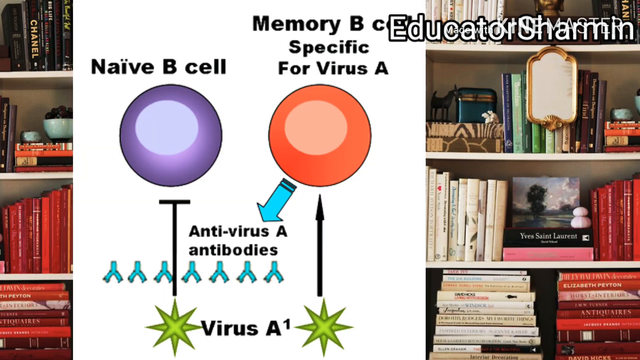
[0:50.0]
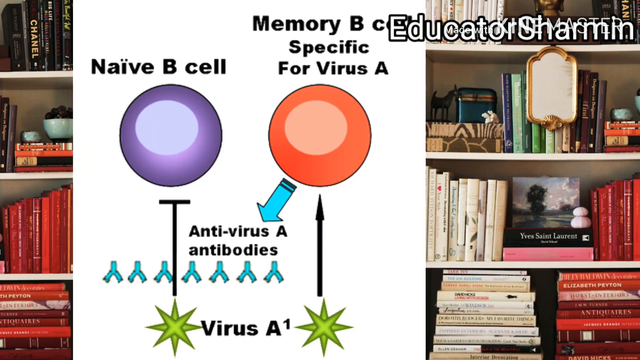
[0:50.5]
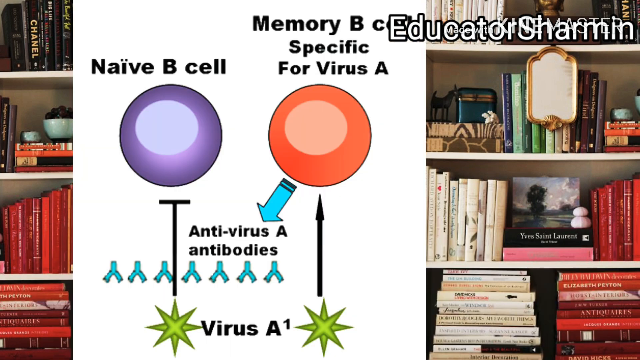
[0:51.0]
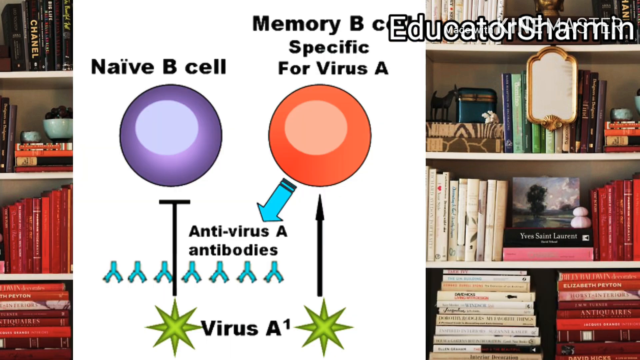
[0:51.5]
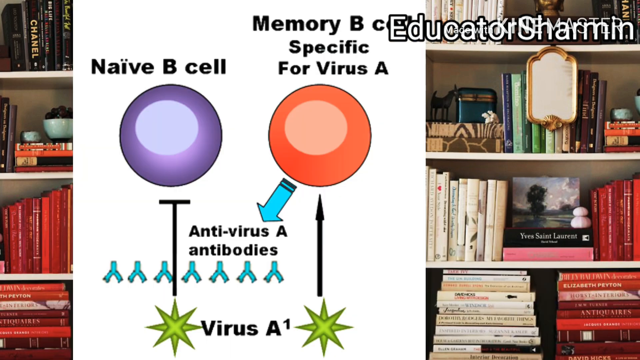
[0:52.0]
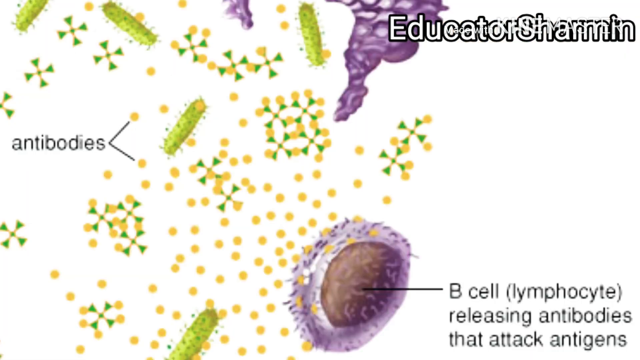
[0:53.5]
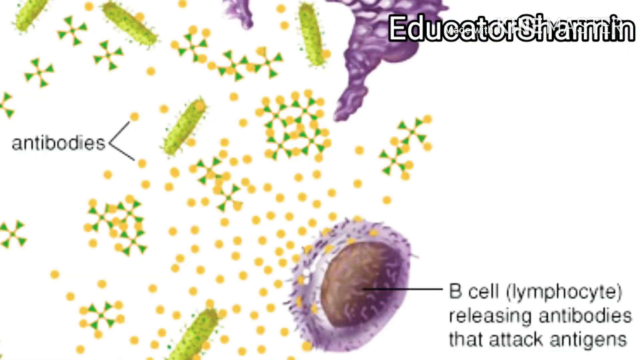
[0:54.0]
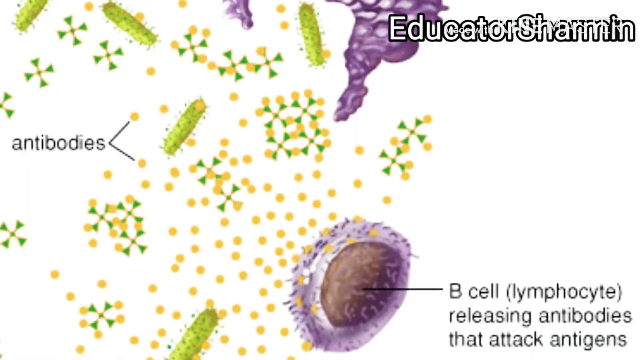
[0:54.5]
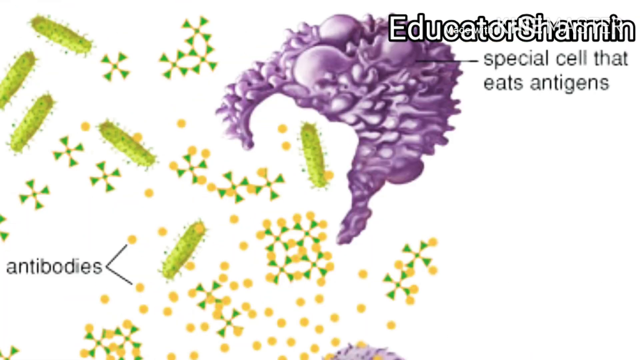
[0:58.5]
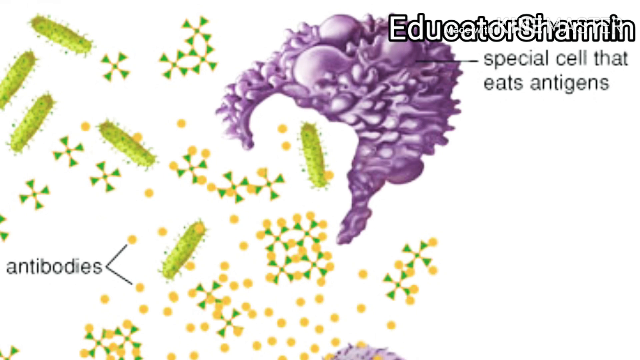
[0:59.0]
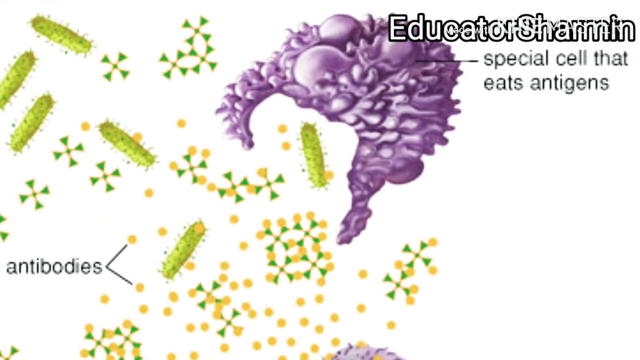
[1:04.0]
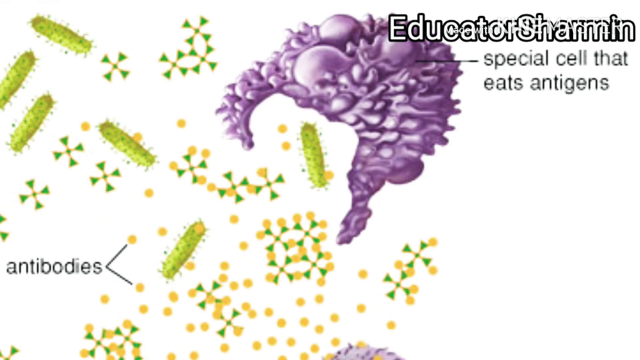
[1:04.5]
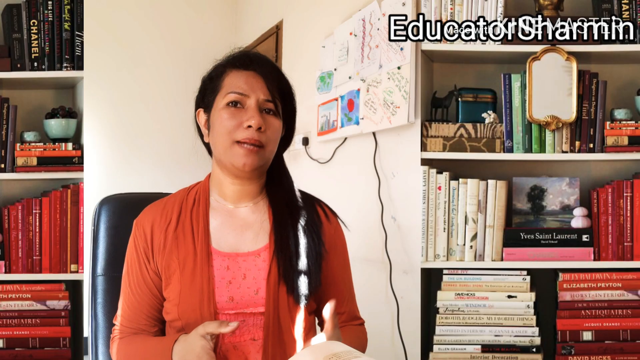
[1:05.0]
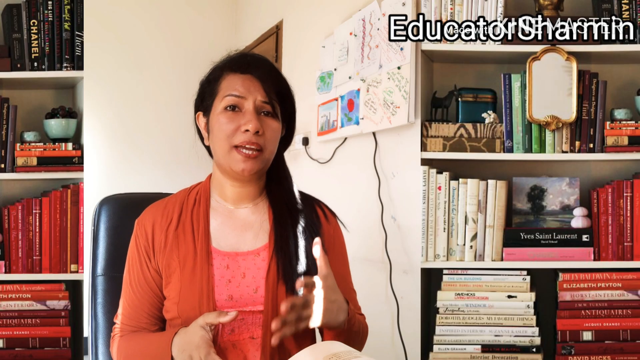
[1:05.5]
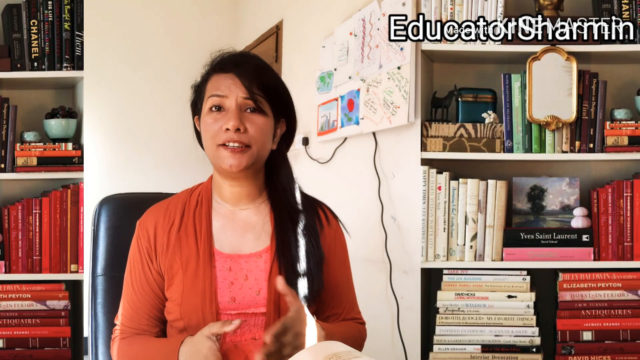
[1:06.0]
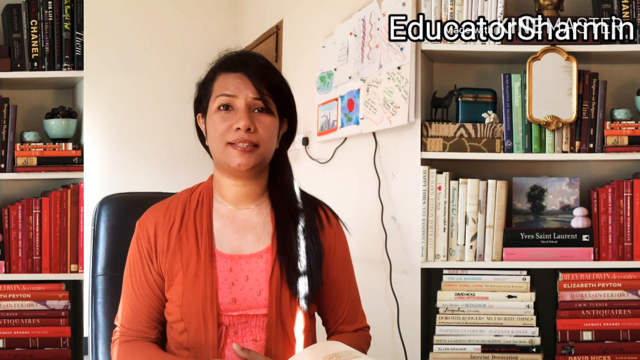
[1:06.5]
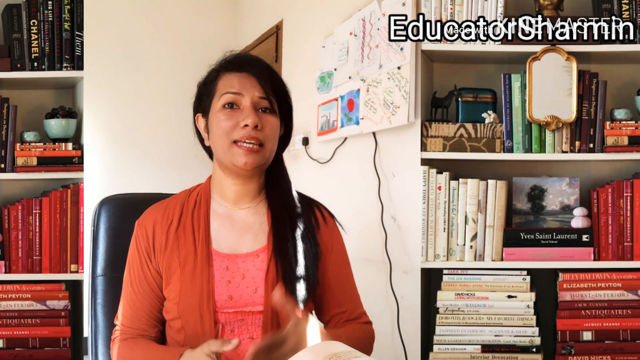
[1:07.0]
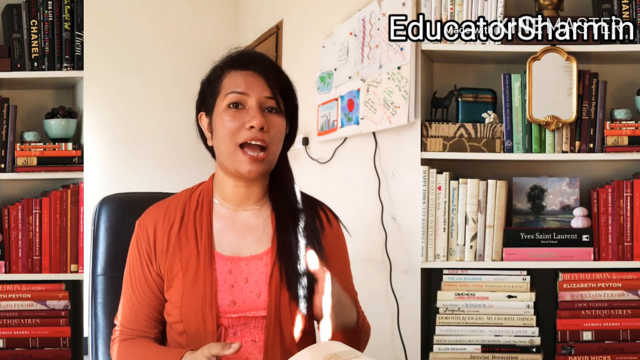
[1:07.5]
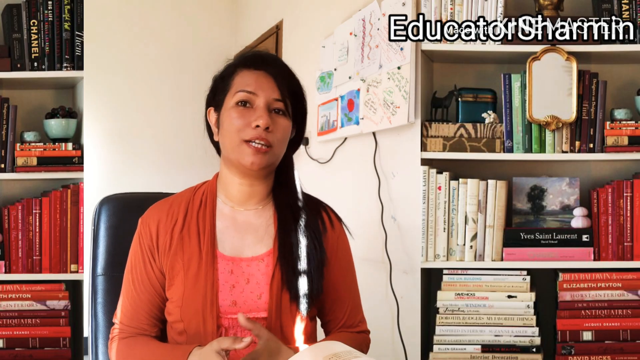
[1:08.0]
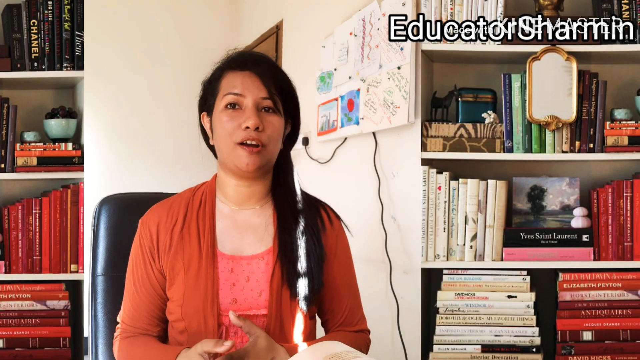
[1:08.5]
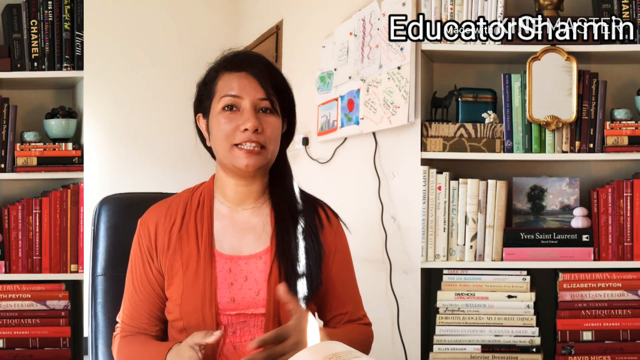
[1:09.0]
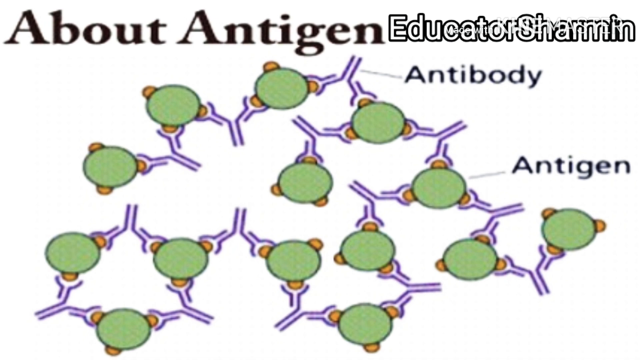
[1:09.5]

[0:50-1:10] A picture of a purple circle and an orange circle appears with text reading "Memory B cell specific for virus A, naive B cell, antivirus A antibodies, antivirus A1." A blue arrow below the orange circle points to the words "Antivirus A antibodies." Two green stars are between the words "virus A1," and two vertical black arrows point to either side of the green stars and the differently colored circles. The presentation then shows a picture of cells and bacteria with text reading "Antibodies, B-cell lymphocyte releasing antibodies." Another slide shows more bacteria and cells with text reading "Antibodies, special cell that eats antigens." The video returns to the woman sitting in a room with bookshelves behind her. Briefly, a slide of cells appears with text reading "About Antigen, antibody, antigen."